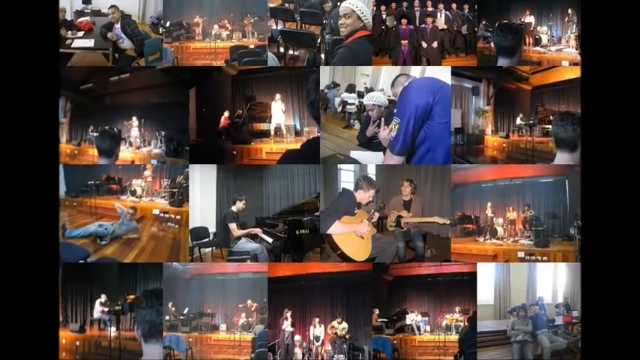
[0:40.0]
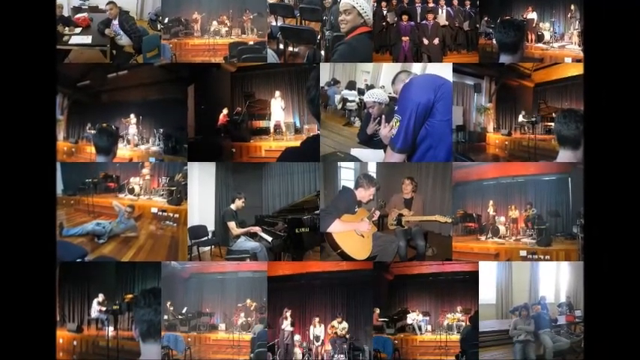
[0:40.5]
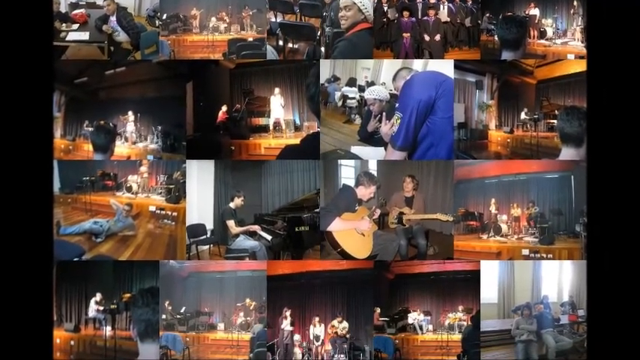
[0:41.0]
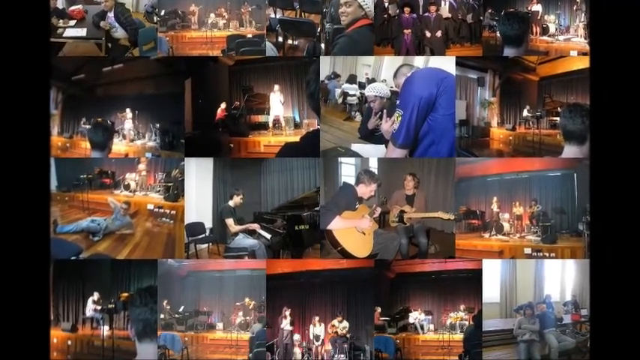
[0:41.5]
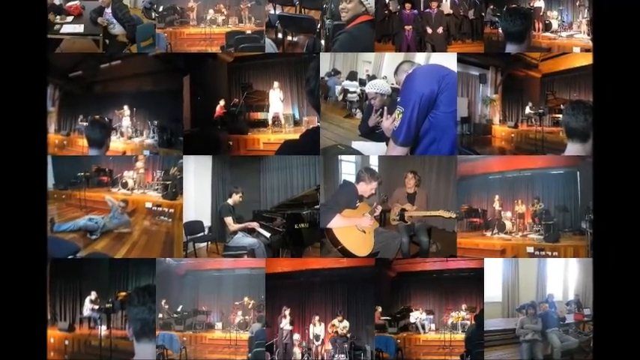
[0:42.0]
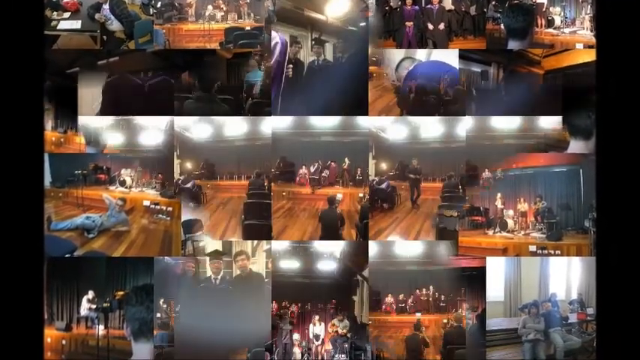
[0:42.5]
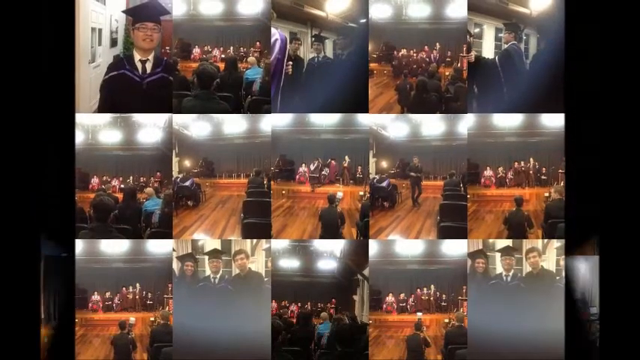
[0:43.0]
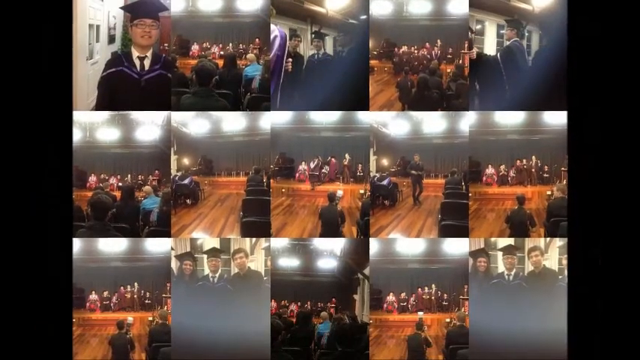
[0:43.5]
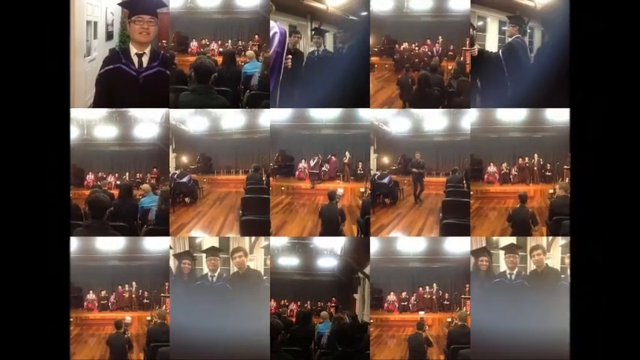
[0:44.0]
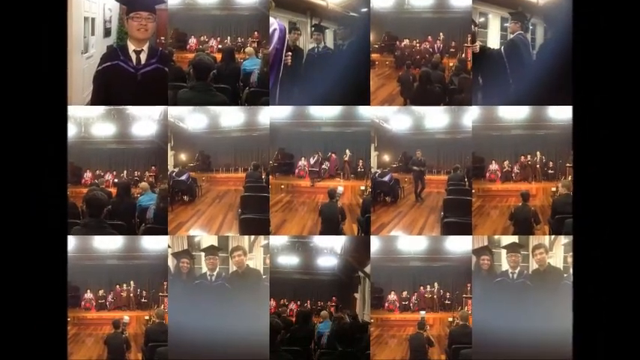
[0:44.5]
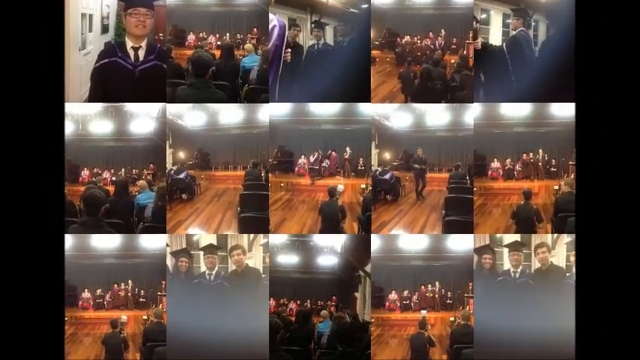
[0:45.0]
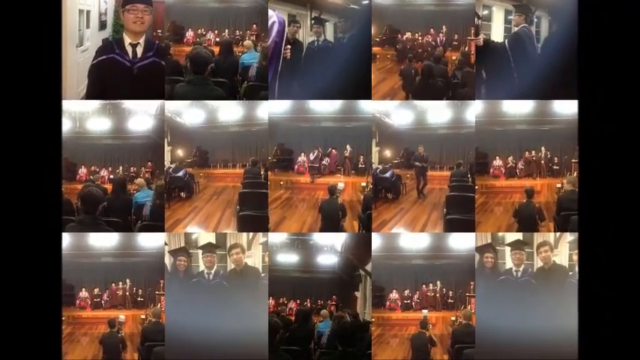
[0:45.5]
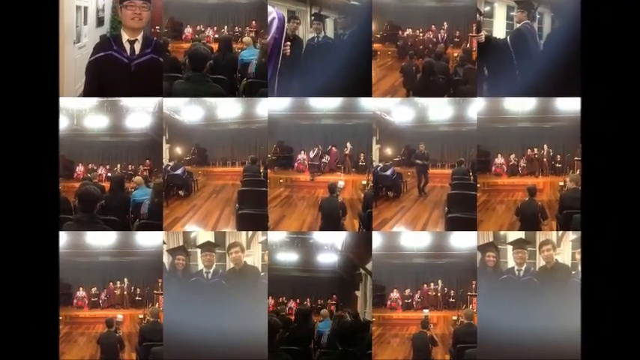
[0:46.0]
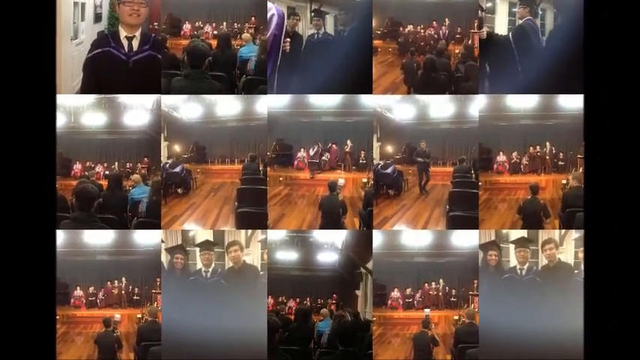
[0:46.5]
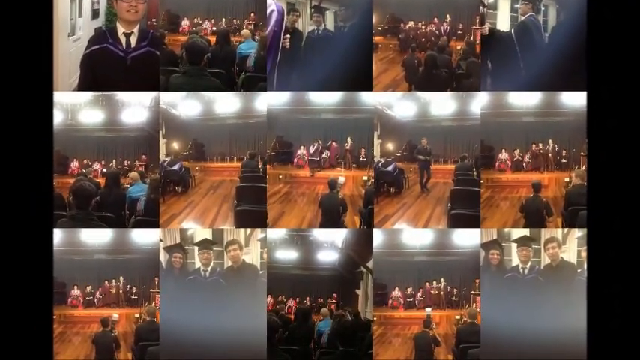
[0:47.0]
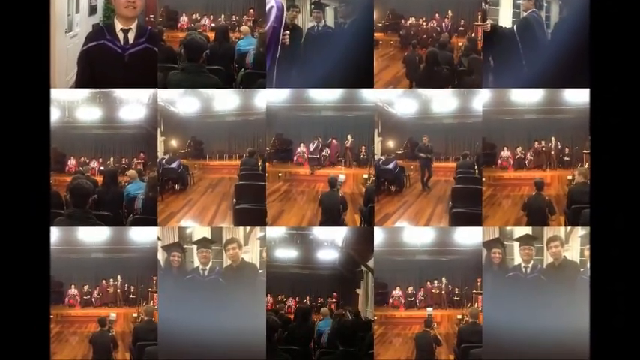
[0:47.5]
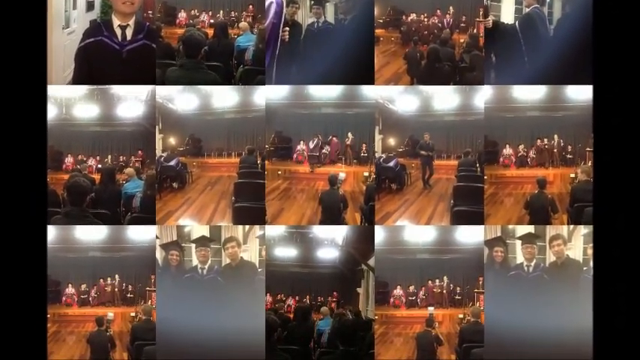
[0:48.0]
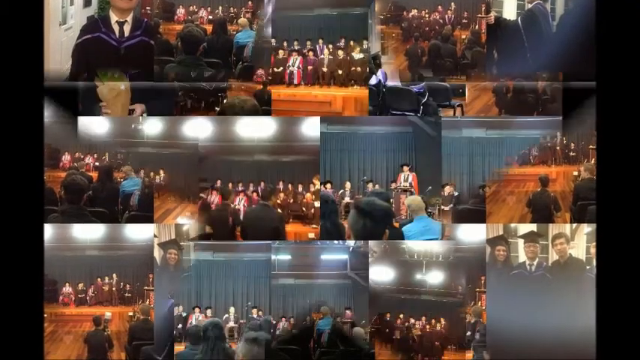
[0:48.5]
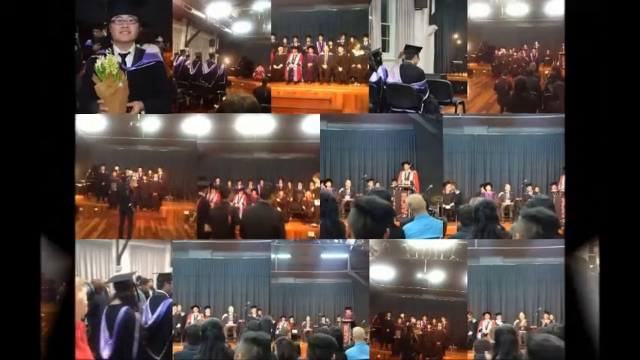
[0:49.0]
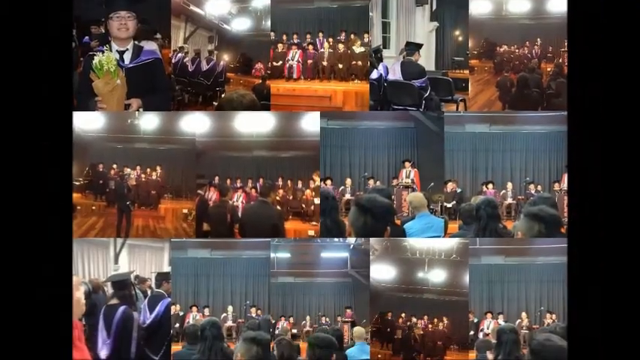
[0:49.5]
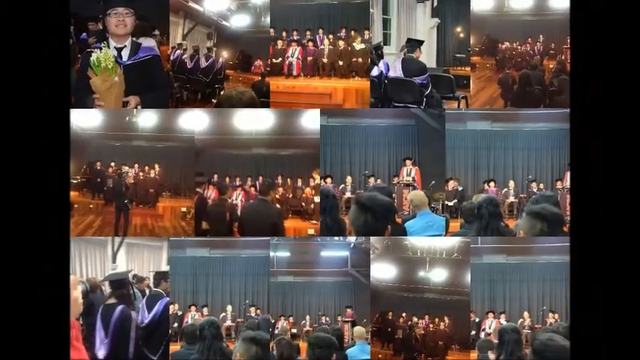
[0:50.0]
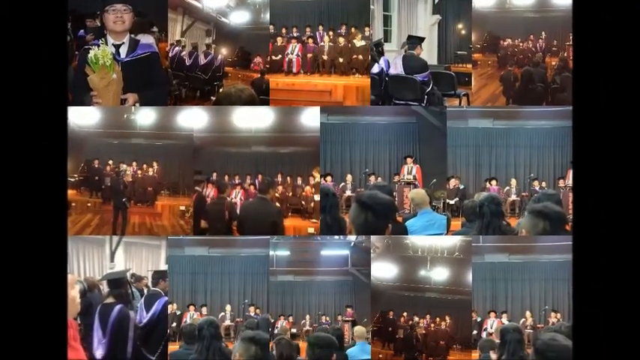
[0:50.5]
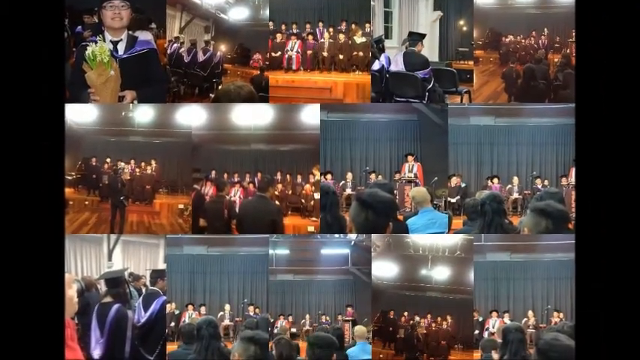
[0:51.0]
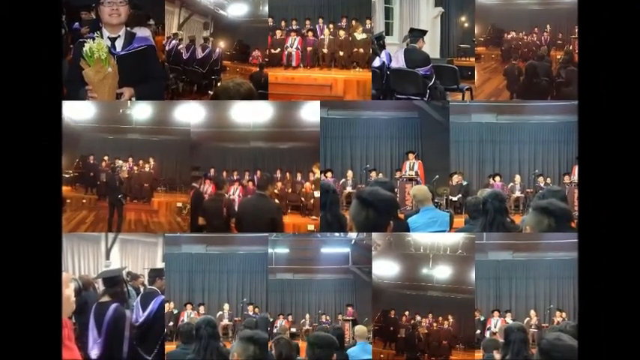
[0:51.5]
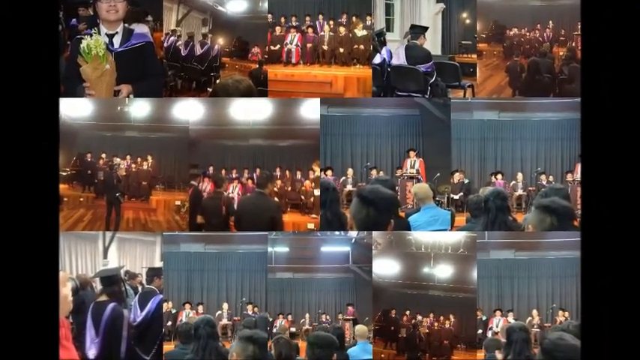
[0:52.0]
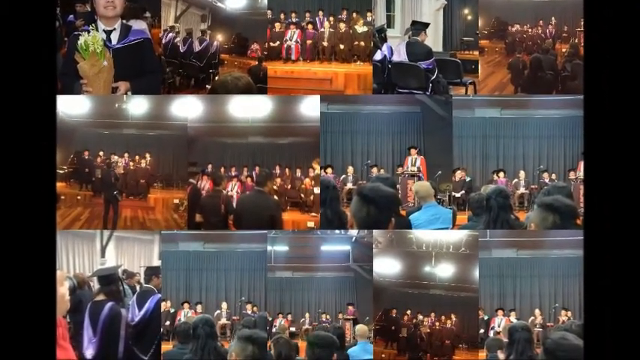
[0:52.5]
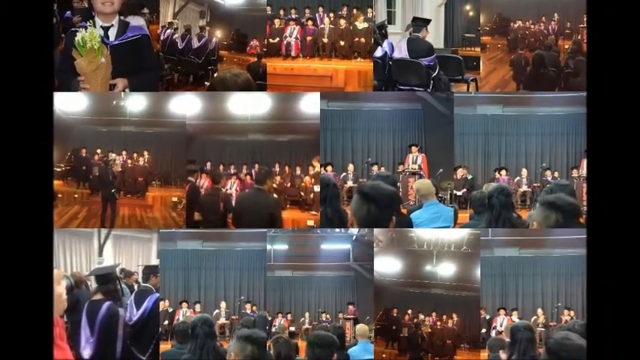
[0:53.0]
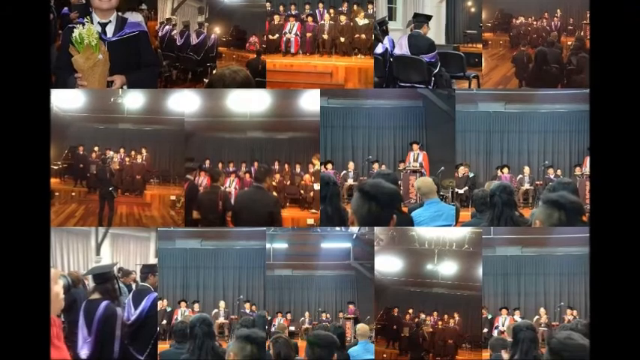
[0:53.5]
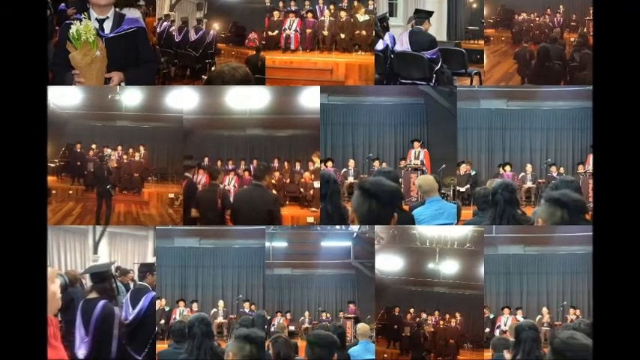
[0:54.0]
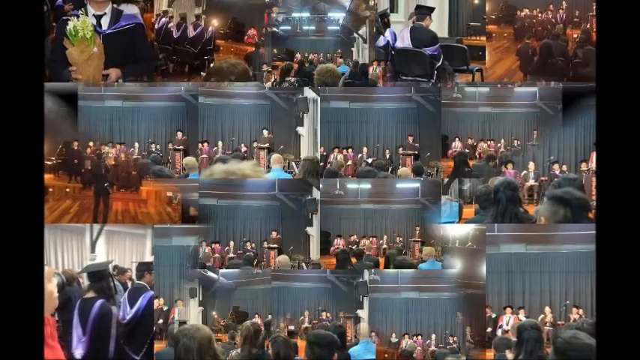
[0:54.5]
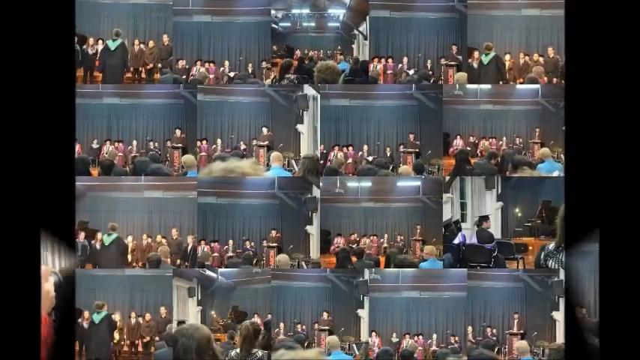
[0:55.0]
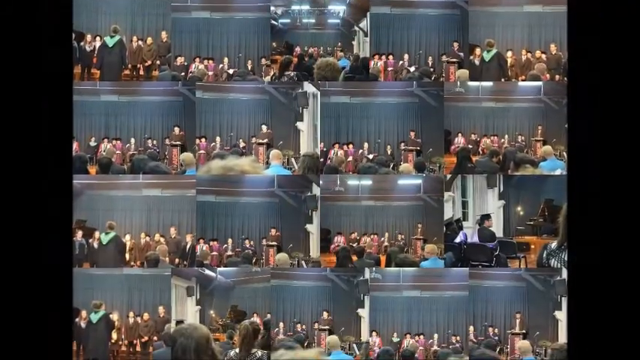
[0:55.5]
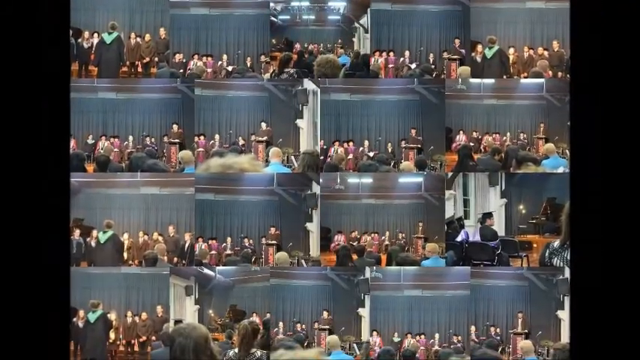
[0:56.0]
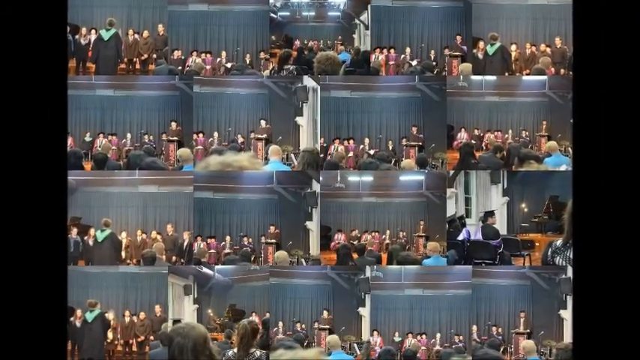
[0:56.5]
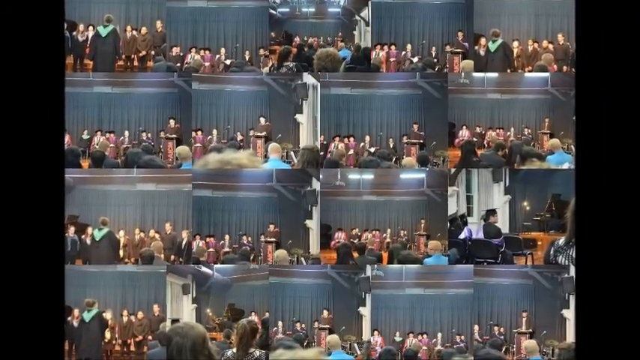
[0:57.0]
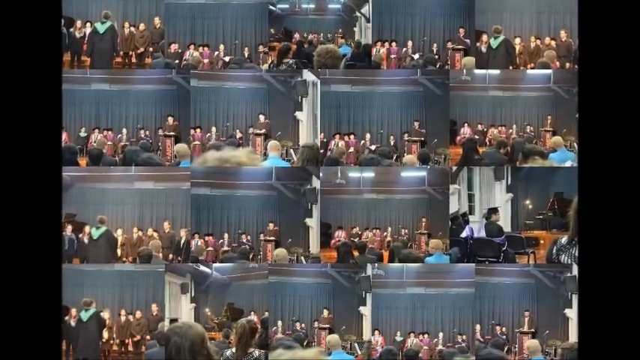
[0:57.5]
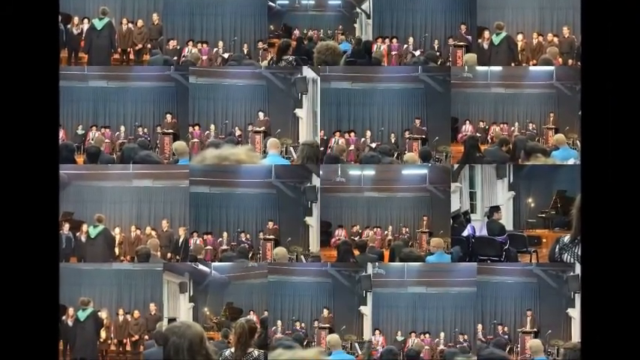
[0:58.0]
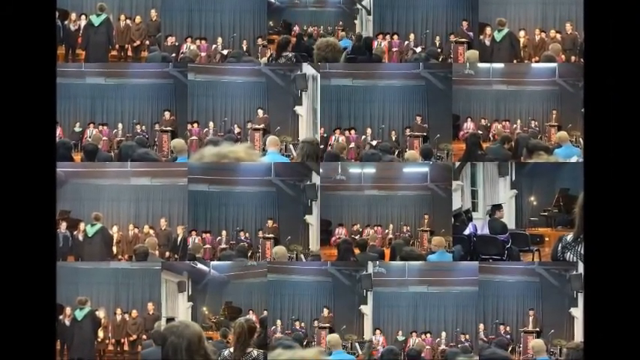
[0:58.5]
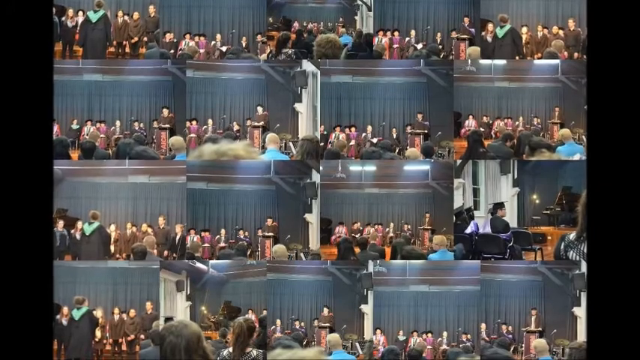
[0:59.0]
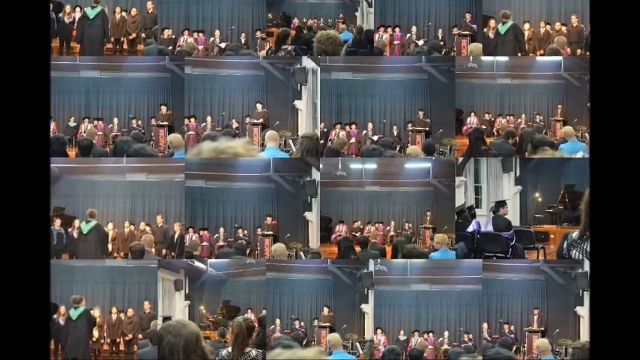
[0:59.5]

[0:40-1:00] The collages continue, now looking more like a graduation. There is a lot of wooden flooring, and people on stage wear gowns, hoods and mortarboard hats. The first two collages are dominated by the stage floor's brown wood, while the third and fourth collages are more focused on the backdrop of the stage, a sort of blue curtain. In the second and third collages a person is giving a speech, maybe a dean or university president, or a school headmaster. A guy in a blue sort of top or shirt appears in quite a few photos; he is in the audience. There is an audience at the graduation, possibly family and friends or possibly the graduands themselves. In at least one photo, one of the graduates holds what looks like a bouquet of flowers.